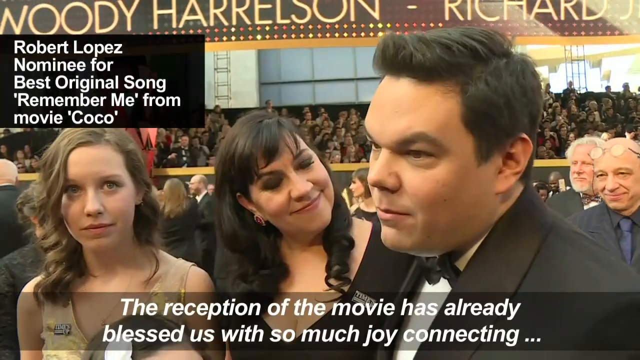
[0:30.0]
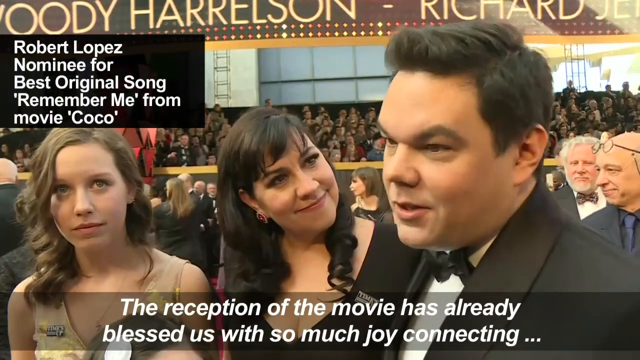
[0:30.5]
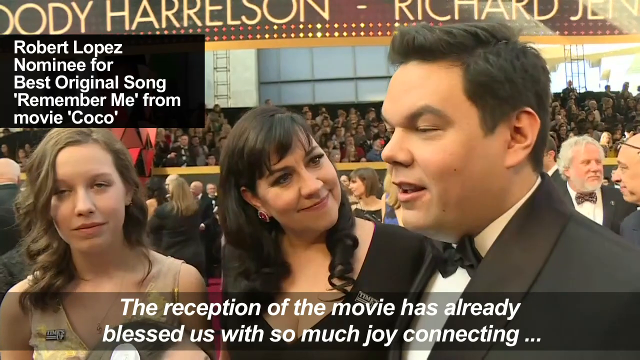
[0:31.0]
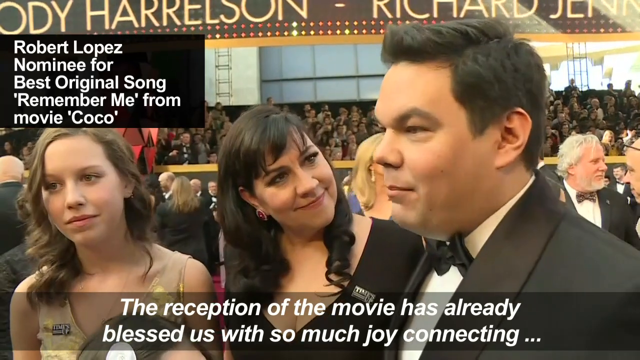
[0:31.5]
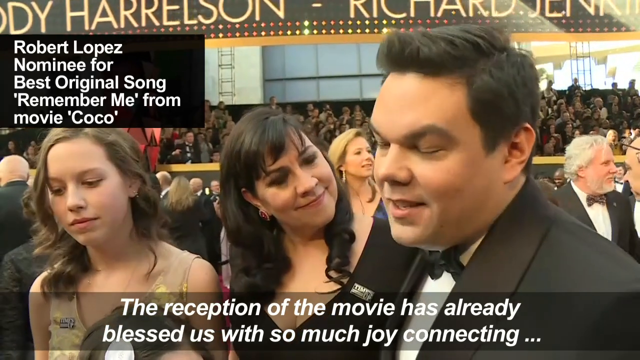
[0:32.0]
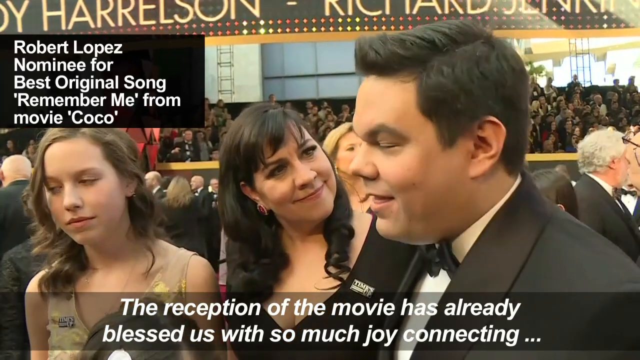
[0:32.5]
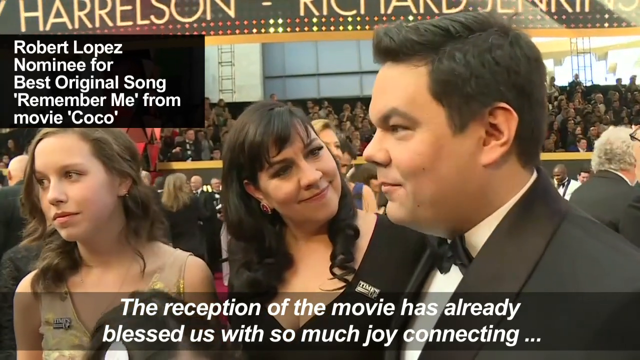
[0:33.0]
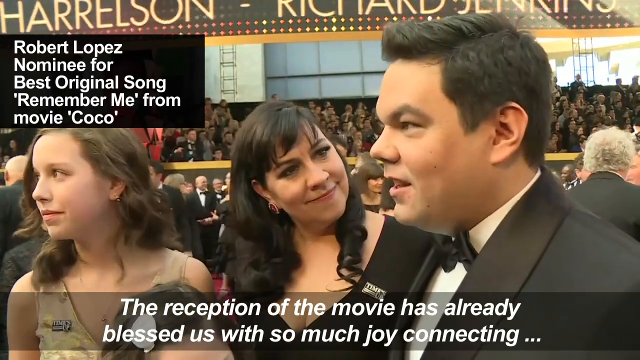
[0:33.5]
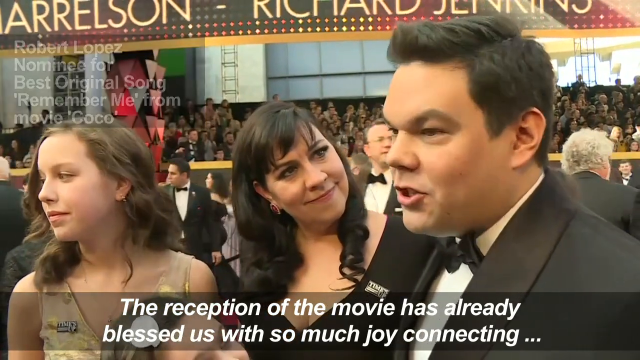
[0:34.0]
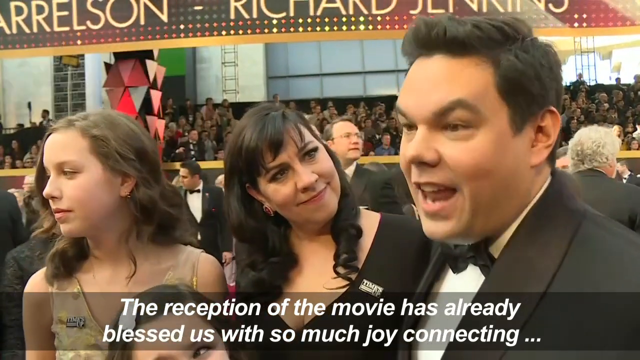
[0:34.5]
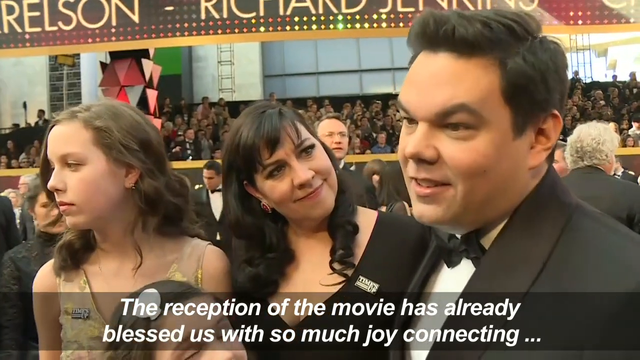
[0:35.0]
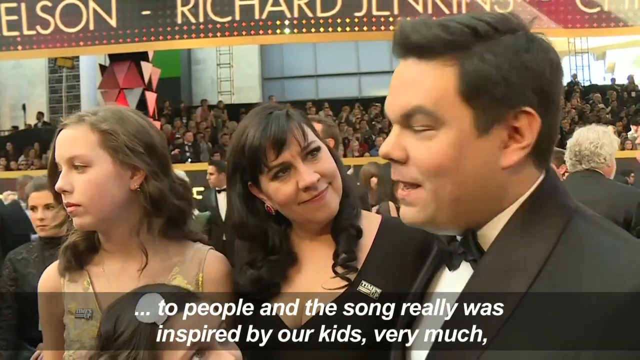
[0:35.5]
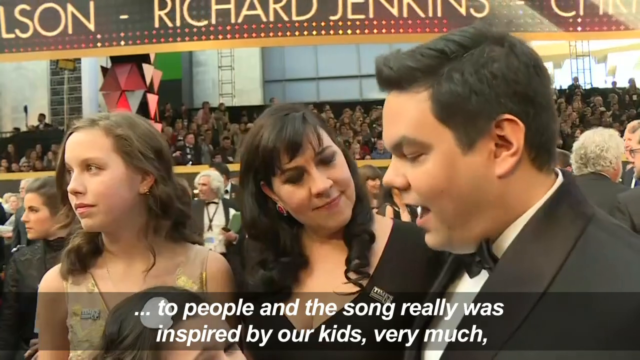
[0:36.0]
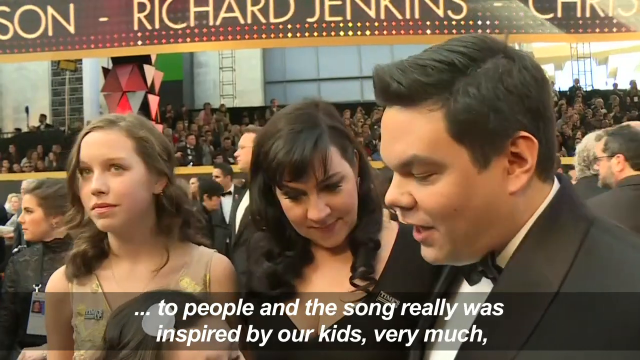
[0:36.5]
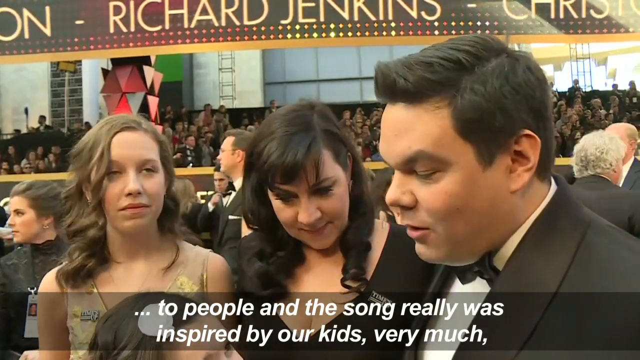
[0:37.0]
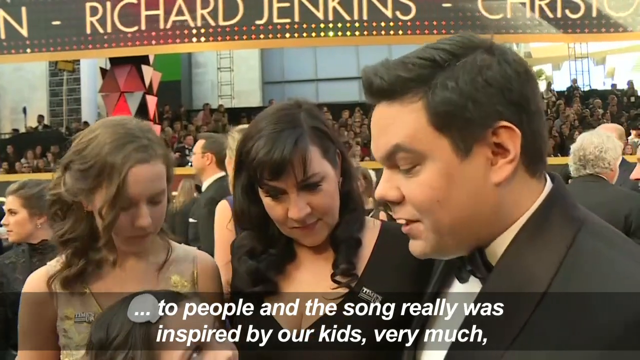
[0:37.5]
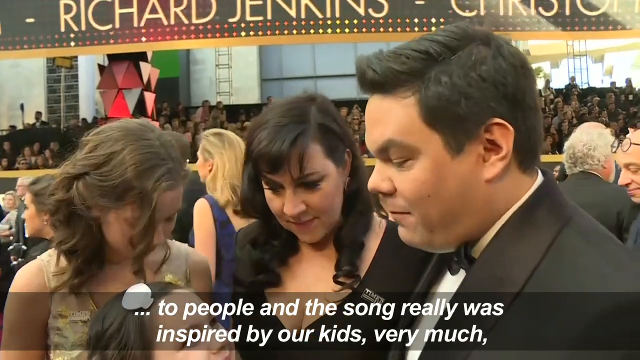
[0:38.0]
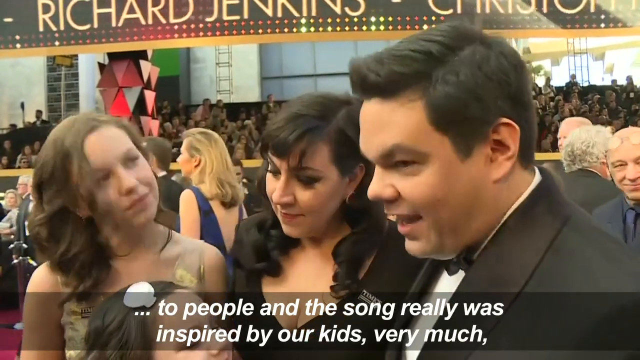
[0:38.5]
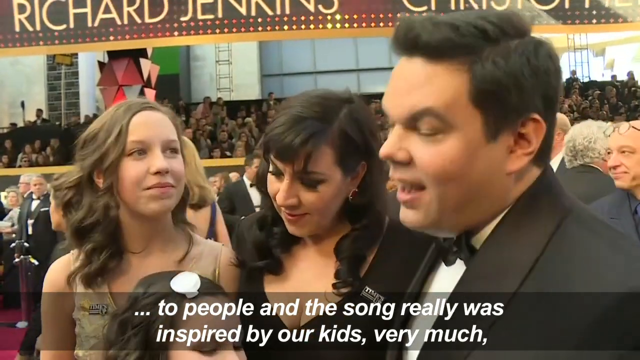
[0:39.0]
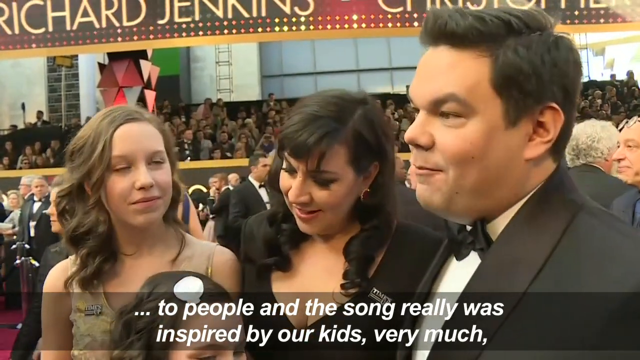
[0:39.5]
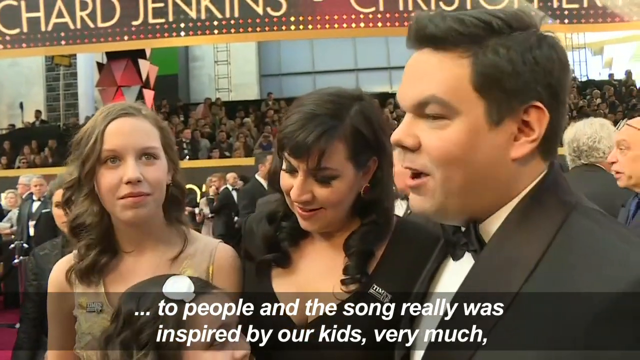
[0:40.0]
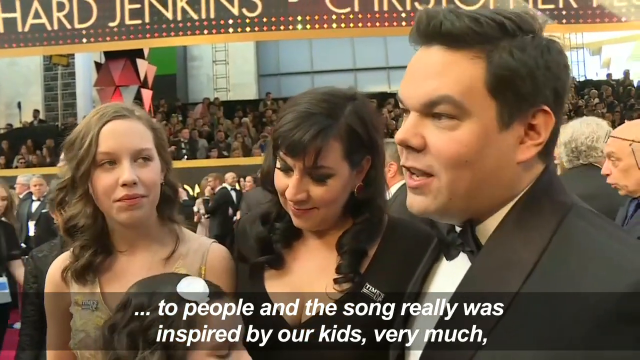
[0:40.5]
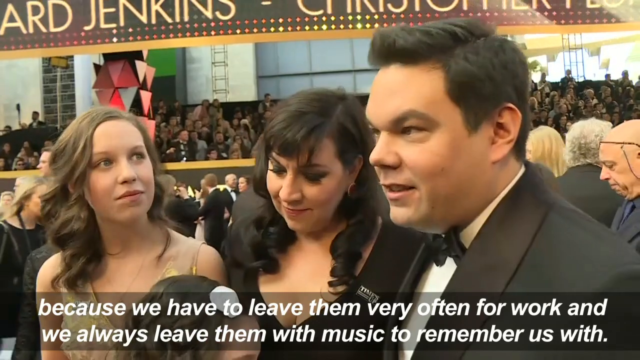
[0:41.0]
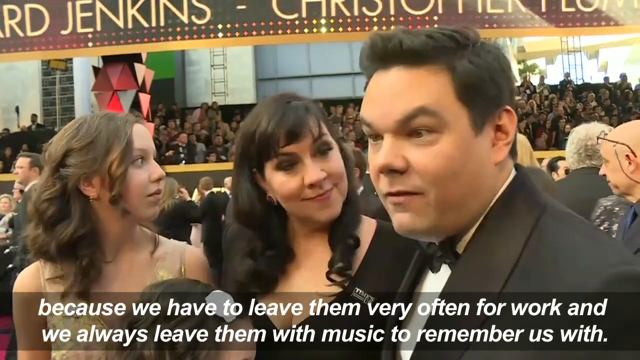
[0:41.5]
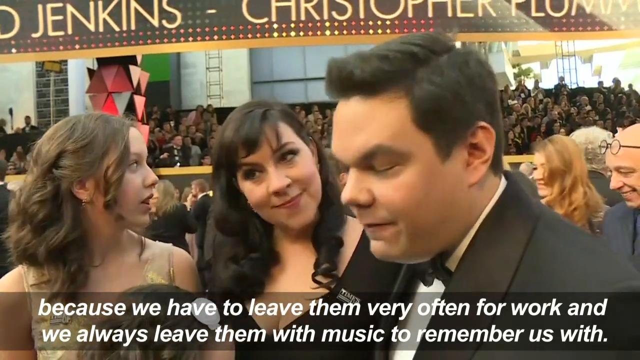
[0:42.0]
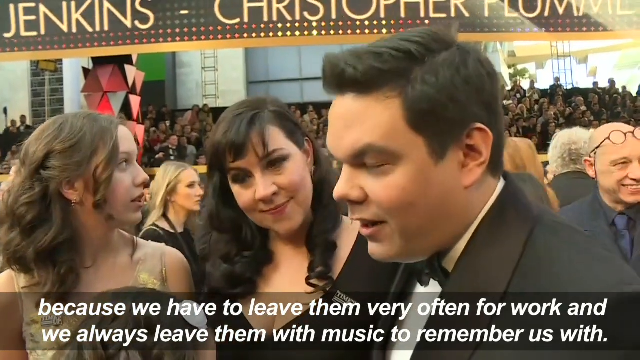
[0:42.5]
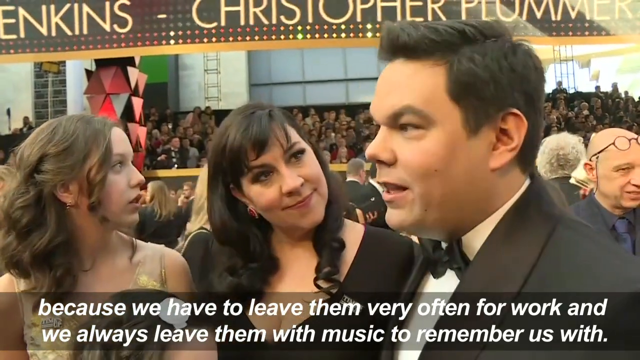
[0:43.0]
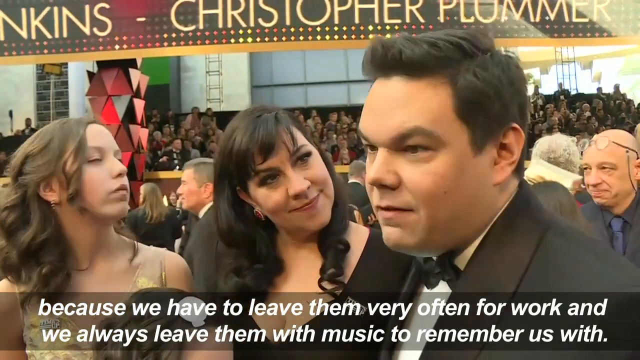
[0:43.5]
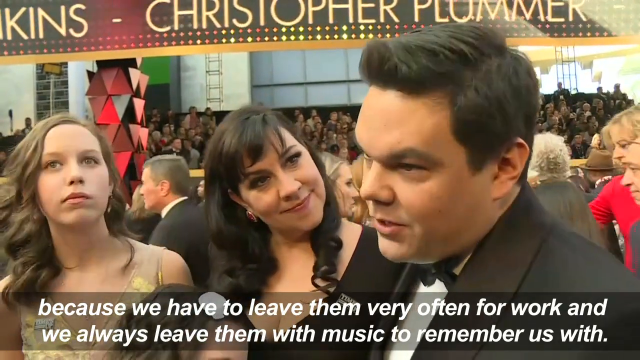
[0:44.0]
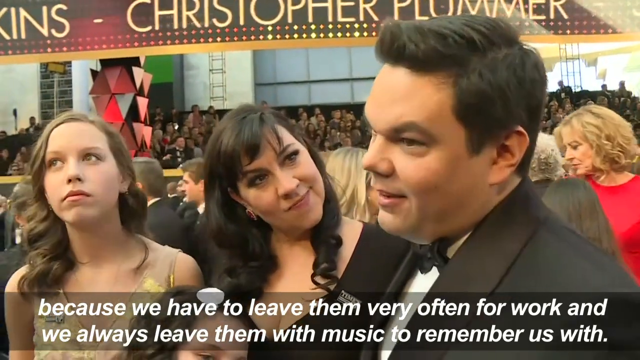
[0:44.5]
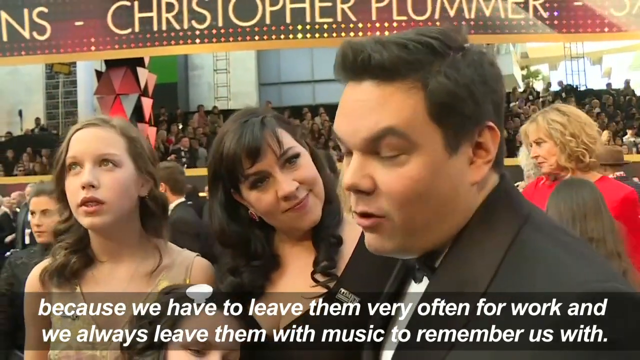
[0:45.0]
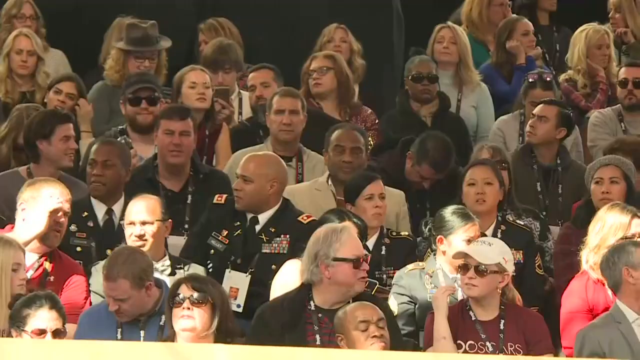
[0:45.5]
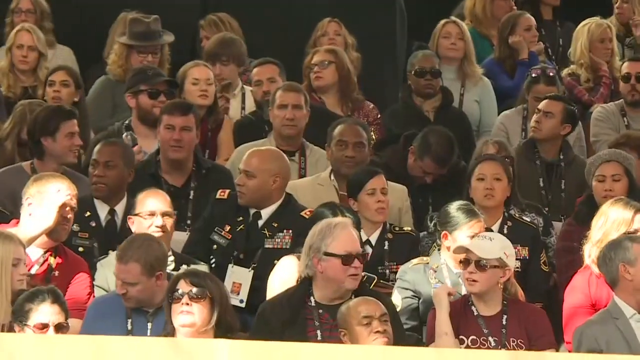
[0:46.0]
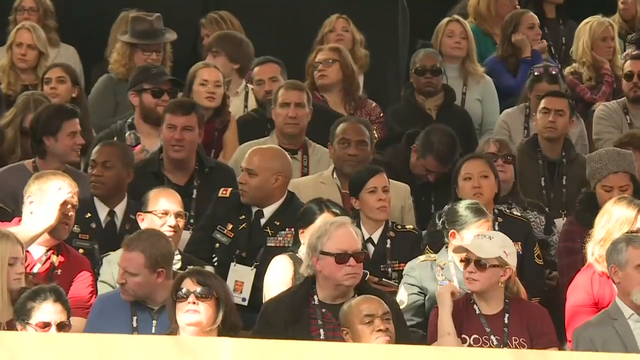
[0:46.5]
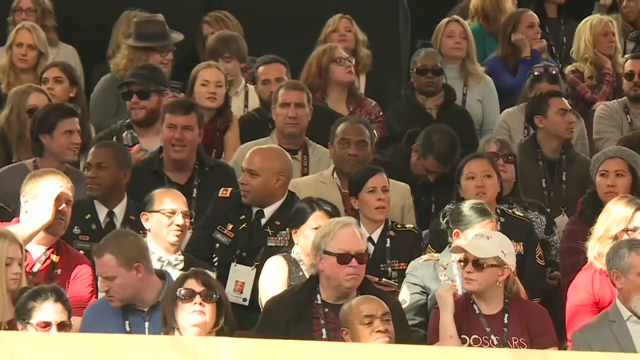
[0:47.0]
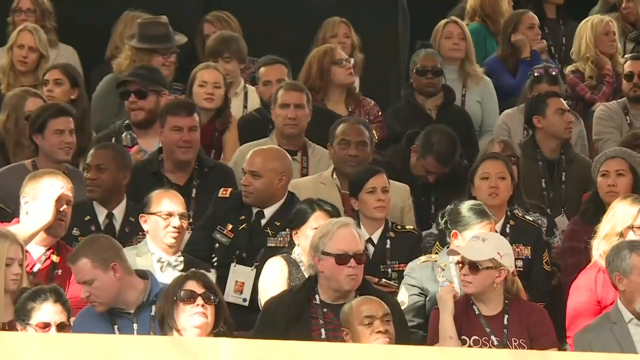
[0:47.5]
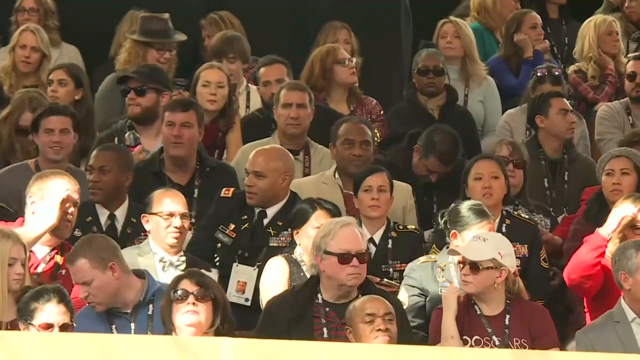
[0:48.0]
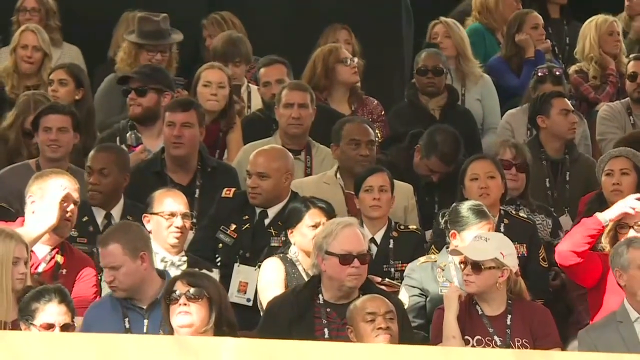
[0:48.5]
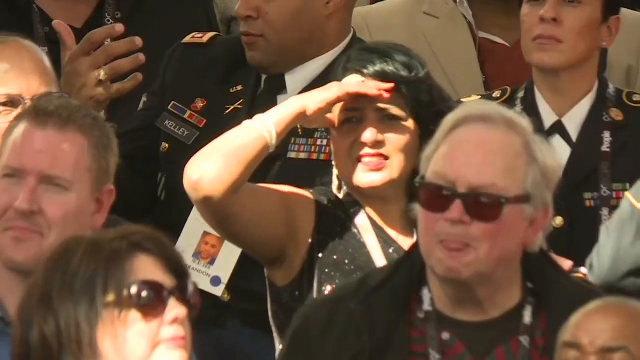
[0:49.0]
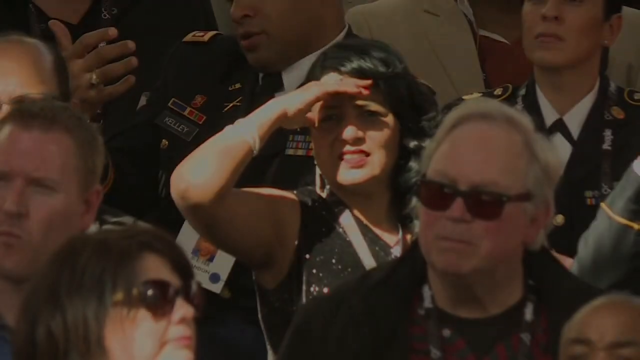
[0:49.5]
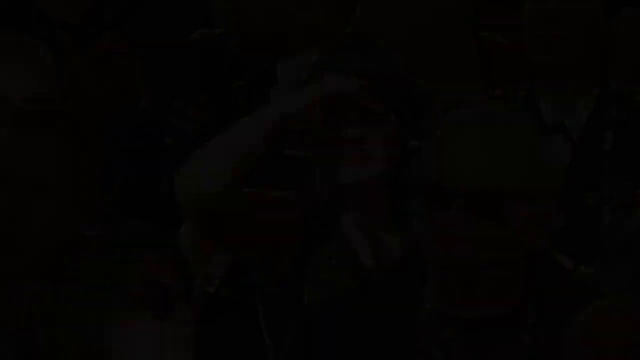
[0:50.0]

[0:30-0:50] A white man wearing a black suit, a white shirt and a black bow tie appears; he seems to be between about 40 and 60 years old. Next to him is a middle-aged woman, apparently between about 50 and 60. Next to them is a young white woman with brown hair wearing a dress. On-screen text reads "Robert Lopez nominee for best original song Remember Me from the movie Coco". Someone appears to be talking, and words appear on the screen reading "the reception of the movie has already blessed us with so much joy connecting to people and the song really was inspired by our kids very much because we have to leave them very often for work and we always leave them with music to remember us with." Camera people are taking photos all over. The scene changes briefly to many people behind the barricades, possibly their fans.